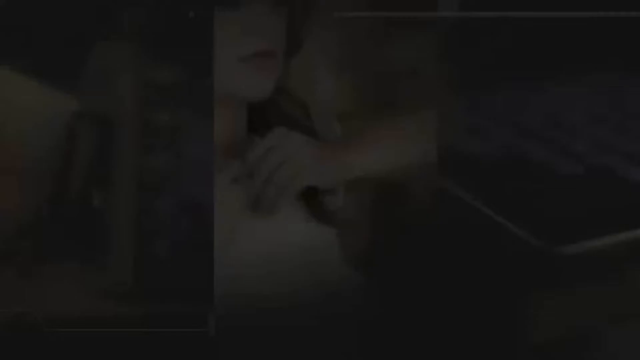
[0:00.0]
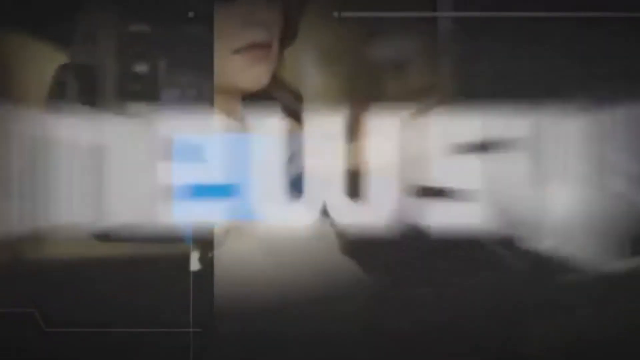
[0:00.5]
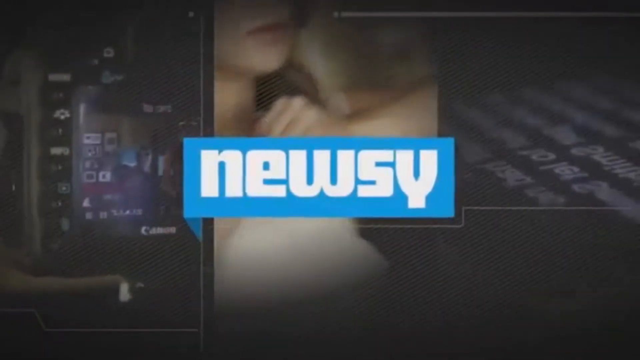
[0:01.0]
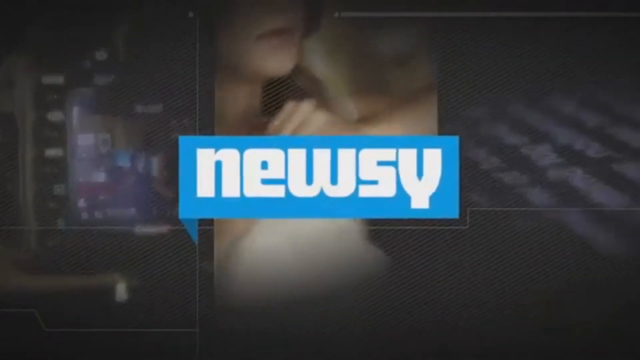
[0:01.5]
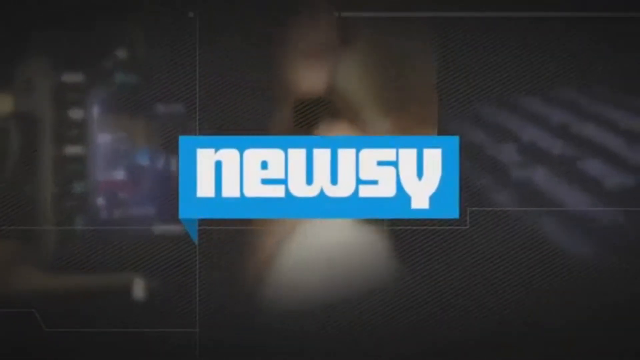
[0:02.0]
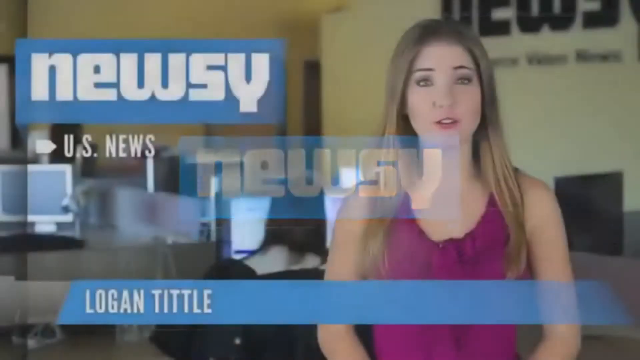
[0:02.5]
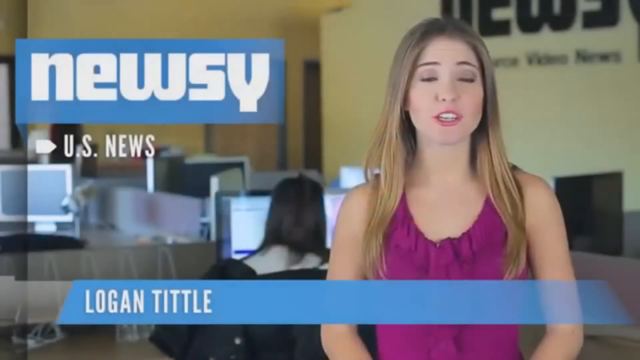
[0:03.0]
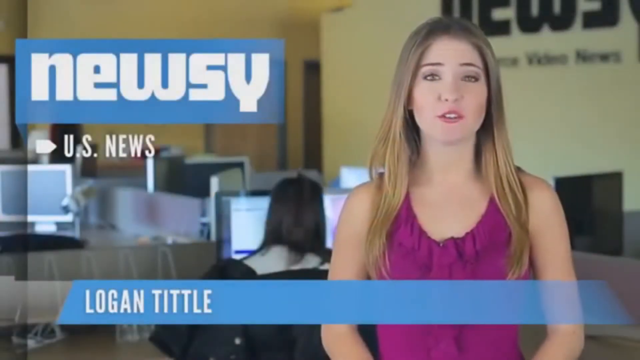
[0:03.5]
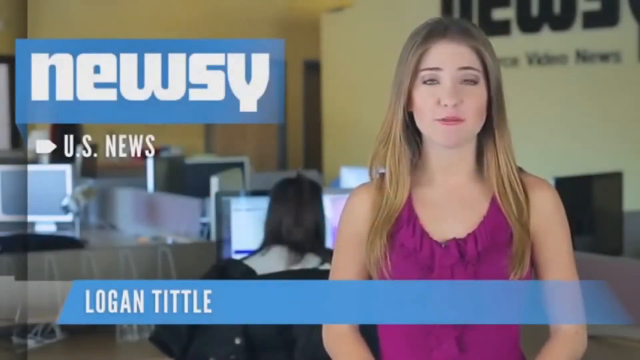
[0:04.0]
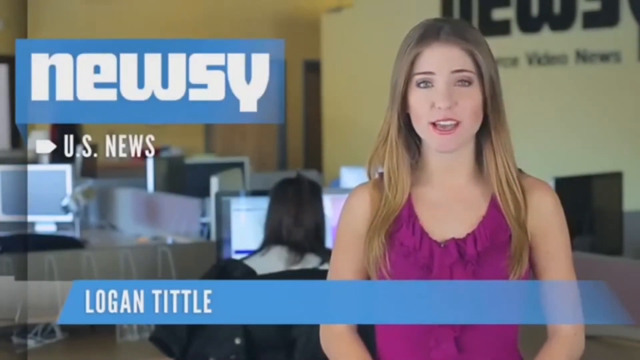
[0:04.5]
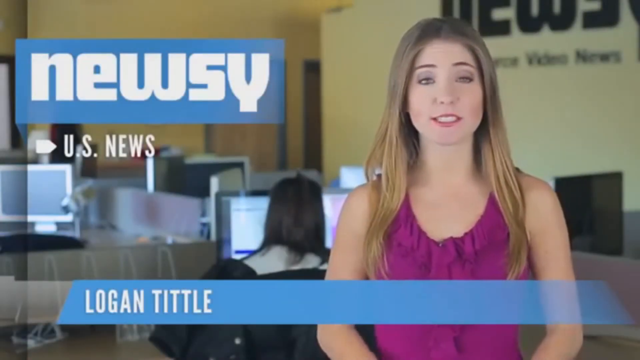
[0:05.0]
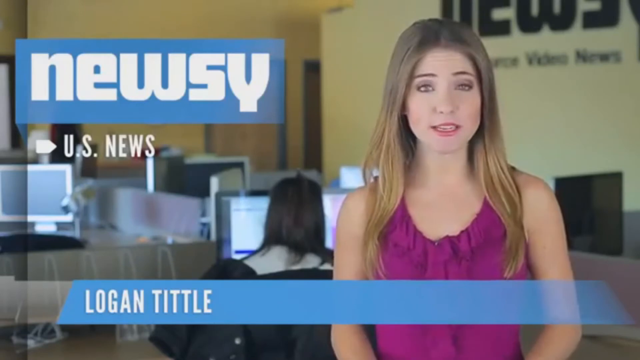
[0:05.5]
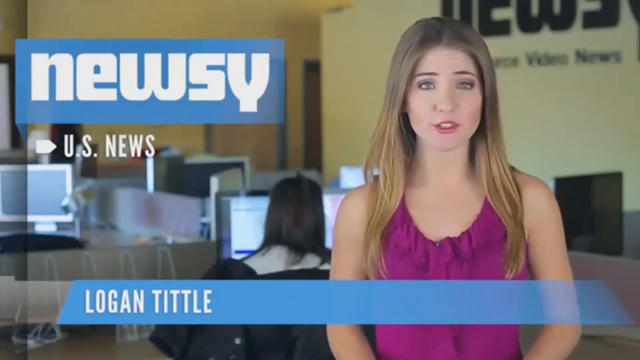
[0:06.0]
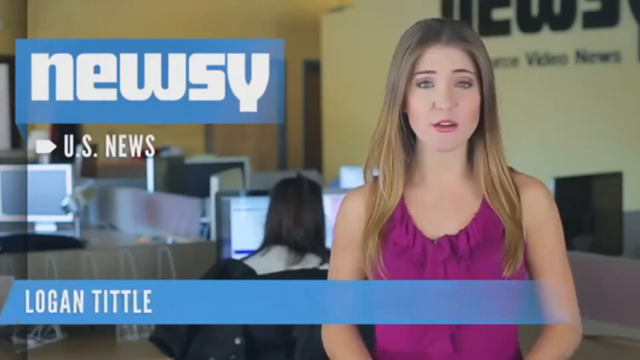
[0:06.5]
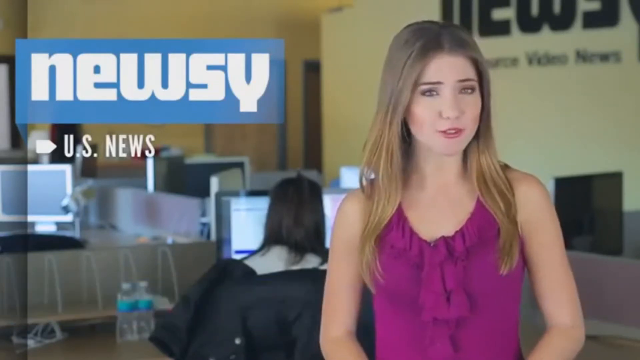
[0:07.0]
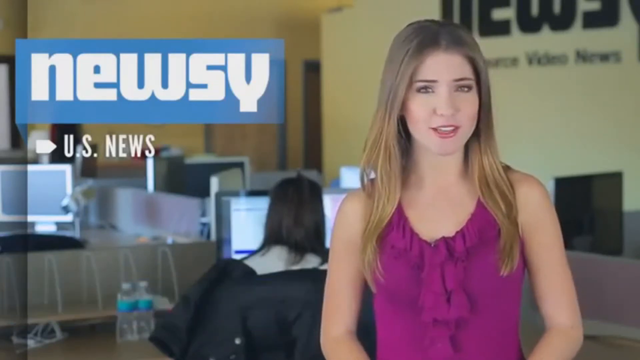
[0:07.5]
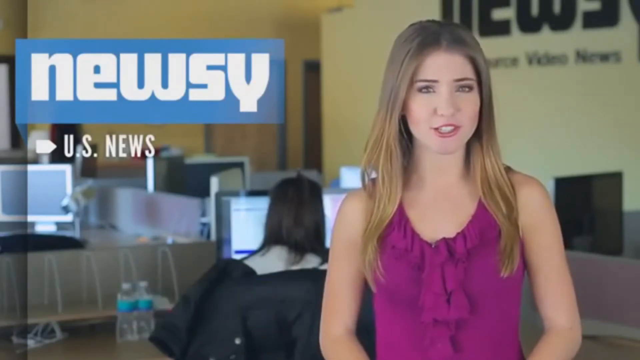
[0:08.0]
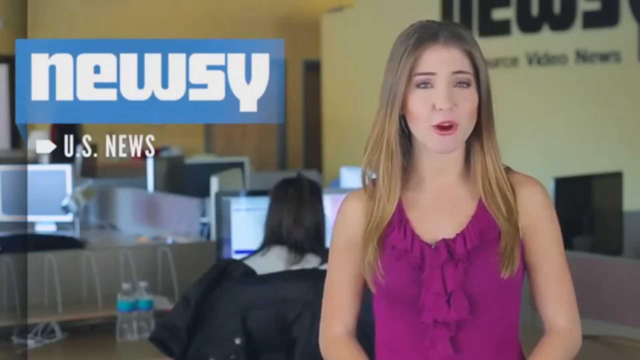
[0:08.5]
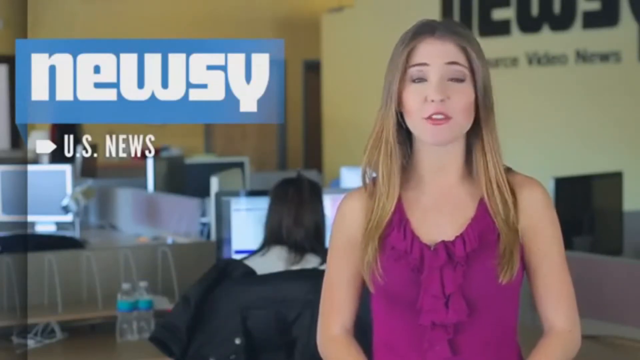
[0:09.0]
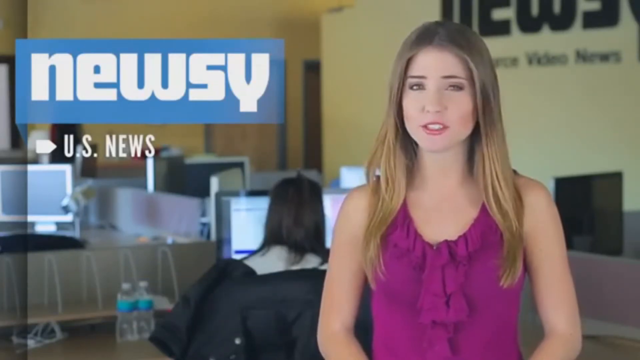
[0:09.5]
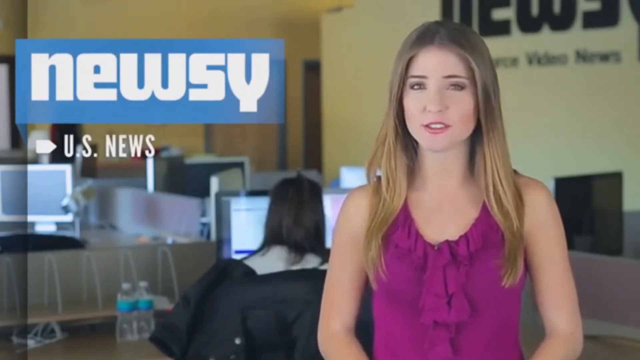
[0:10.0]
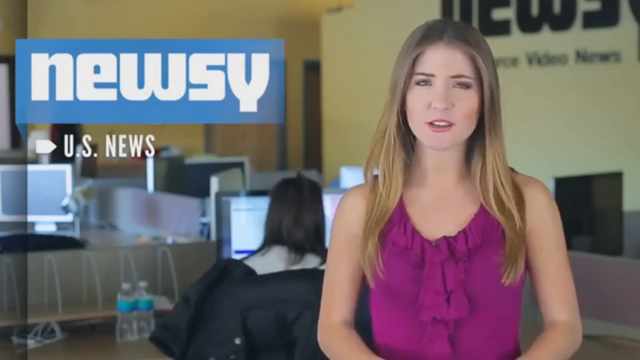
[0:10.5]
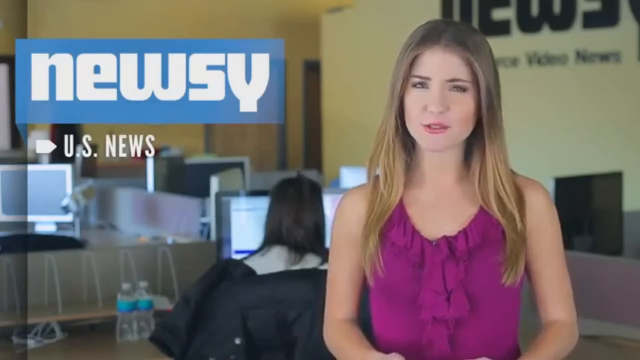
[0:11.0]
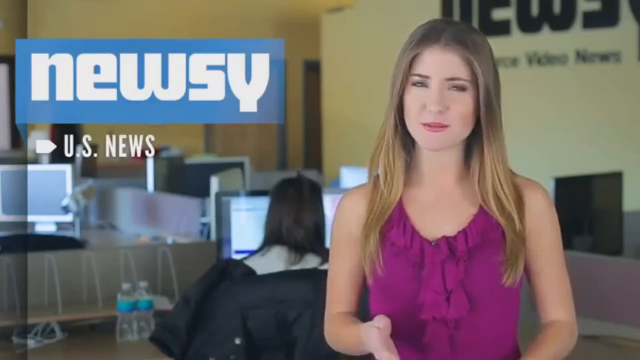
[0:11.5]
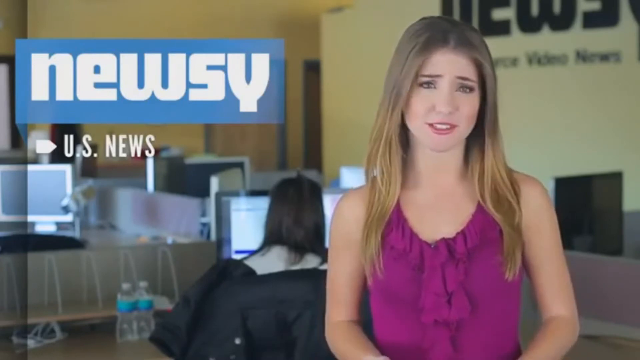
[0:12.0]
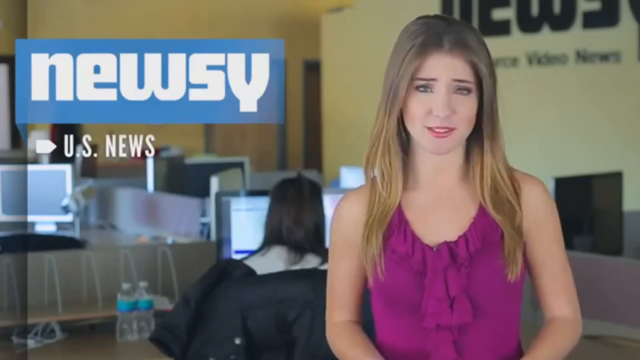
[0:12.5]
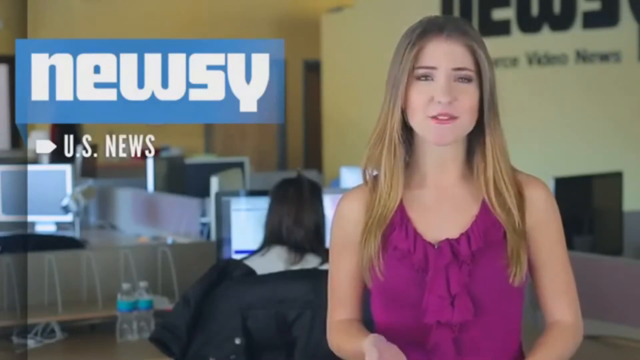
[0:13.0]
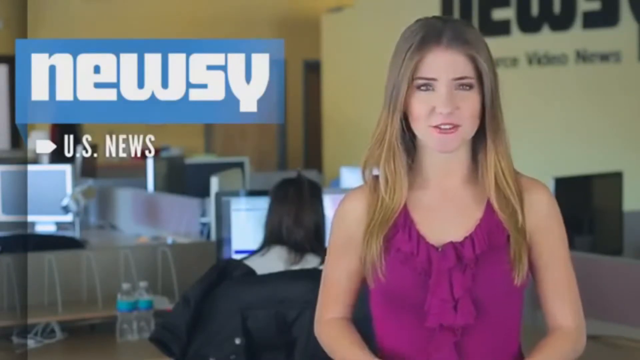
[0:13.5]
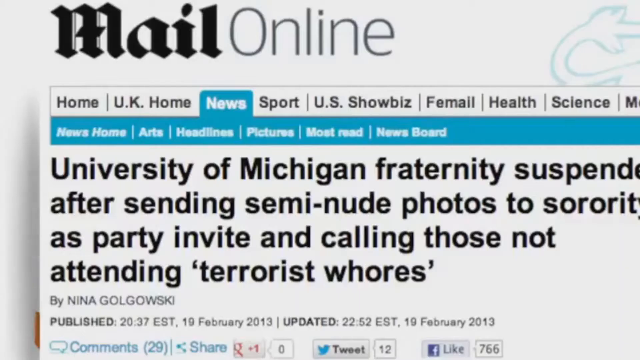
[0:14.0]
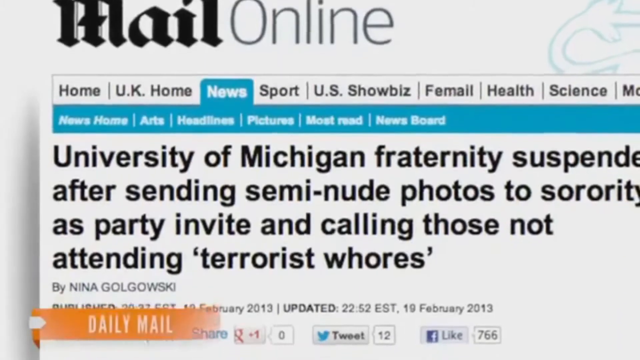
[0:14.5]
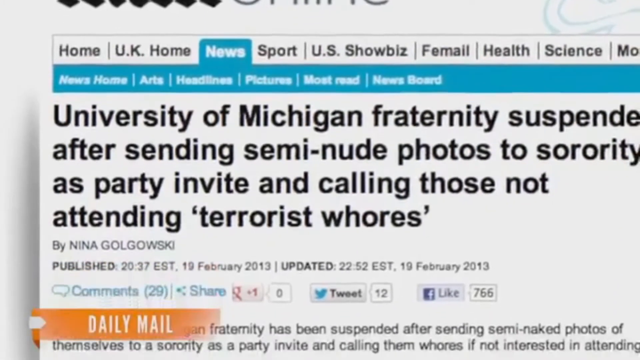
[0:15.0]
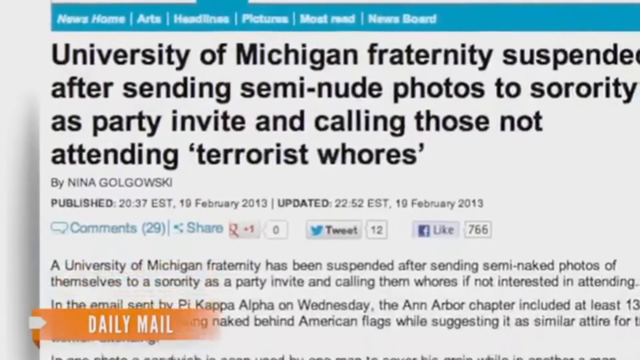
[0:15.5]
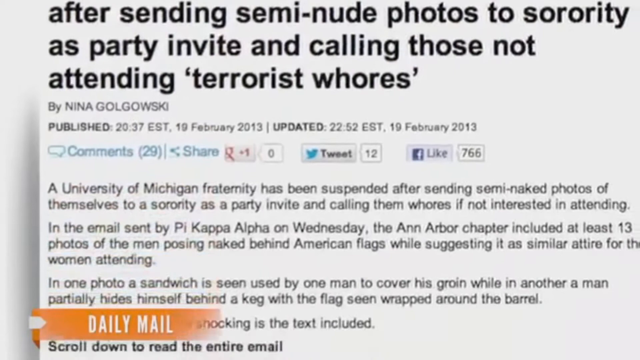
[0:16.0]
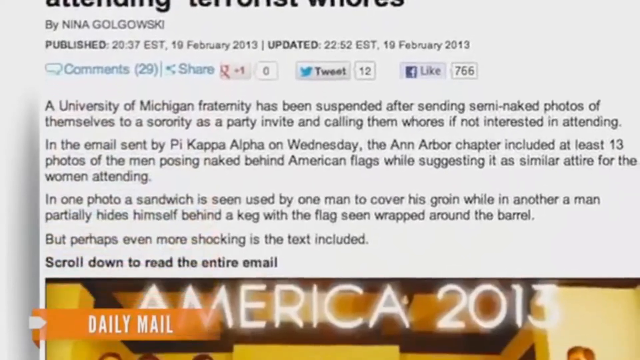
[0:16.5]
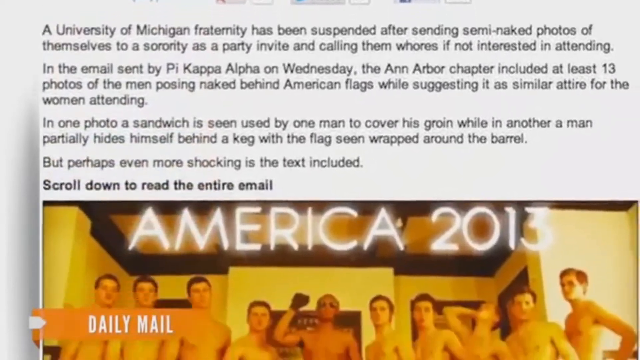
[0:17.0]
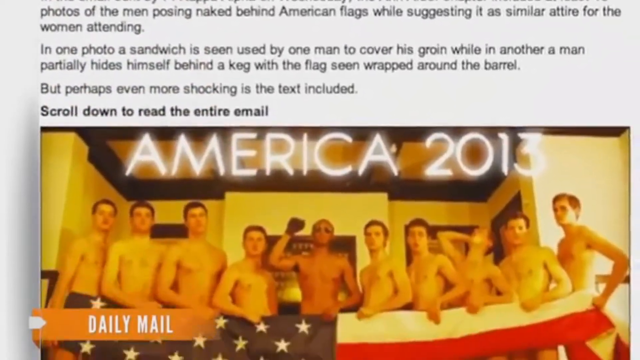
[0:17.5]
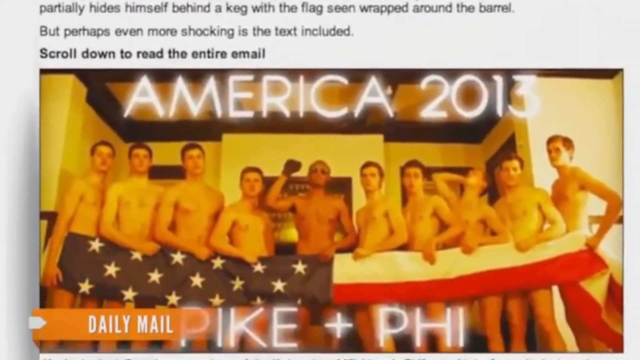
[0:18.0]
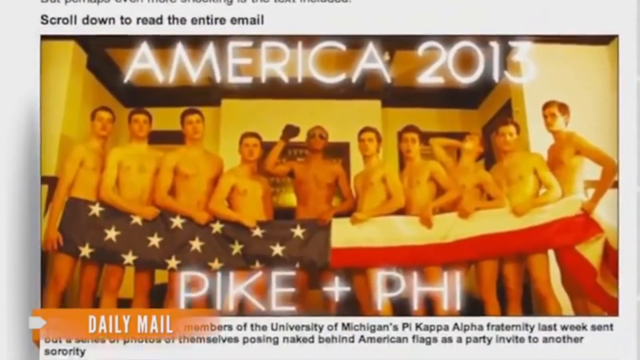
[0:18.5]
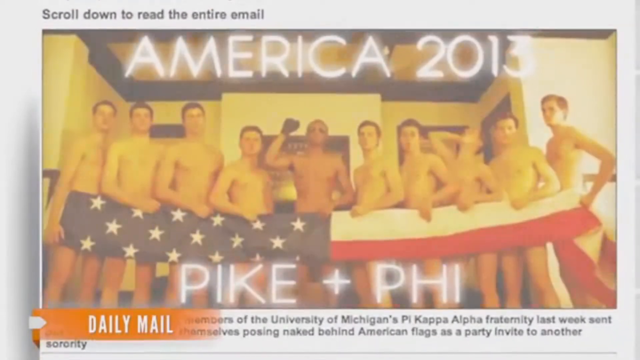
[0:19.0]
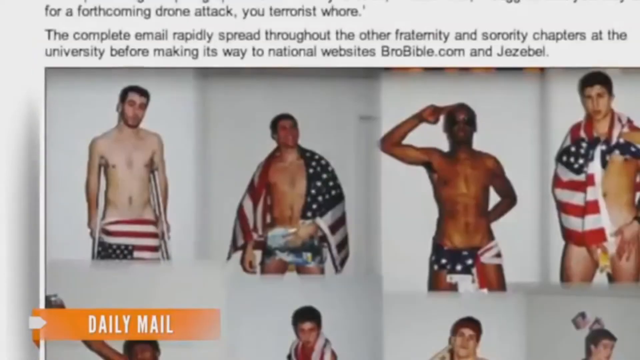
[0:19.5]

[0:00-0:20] The video opens with three or more videos on the side and a blue background with white text that reads "Newsy". It then cuts to a woman, identified as Logan Tittle, speaking towards the camera while wearing a purple outfit. Behind her is a person sitting at a computer, with more computers visible. The view changes to a partially cut-off article from Mail Online; the visible part of the headline reads "University of Michigan fraternity suspends after sending semi-nude photos to sorority as party invite and calling those not attending 'terrorist whores'". The source is identified as Daily Mail, and the view scrolls down through the article, showing a picture of a number of topless men behind an American flag that covers their mid sections. Above them is the text "America 2013" and below them "PIKE + PHI". Next, a number of other men appear with American flags wrapped around their bodies, otherwise generally without clothes.